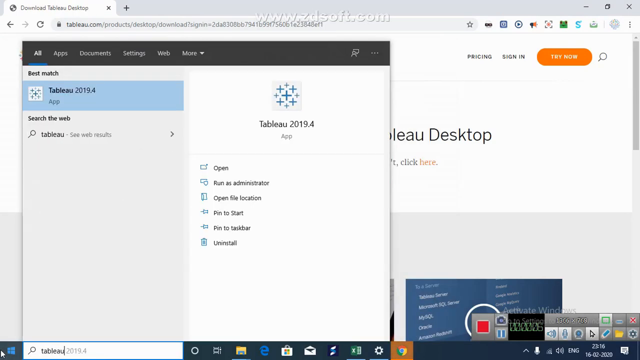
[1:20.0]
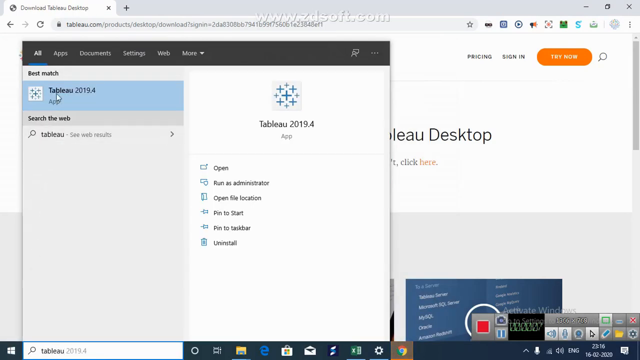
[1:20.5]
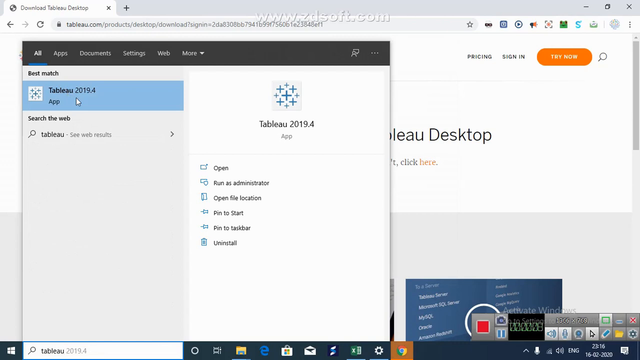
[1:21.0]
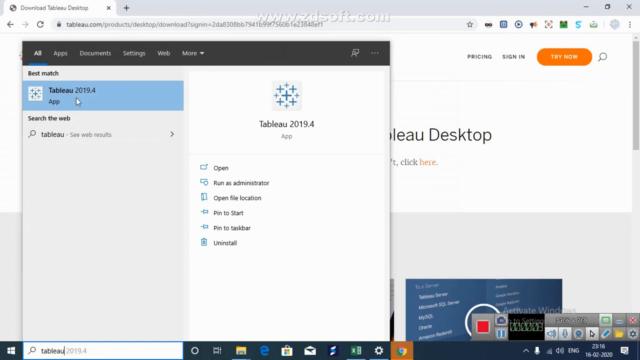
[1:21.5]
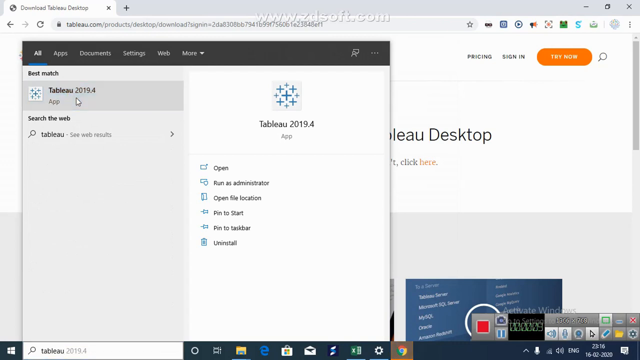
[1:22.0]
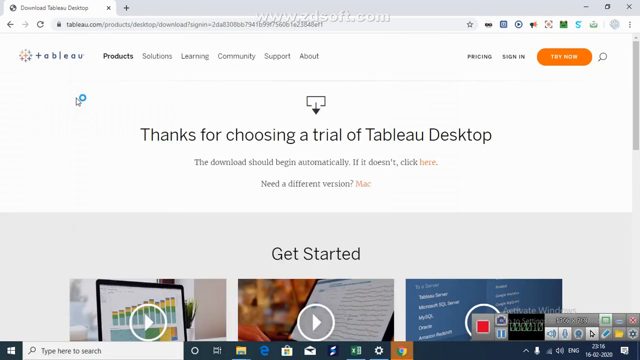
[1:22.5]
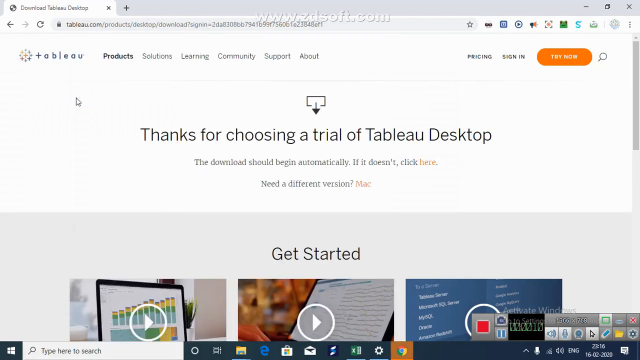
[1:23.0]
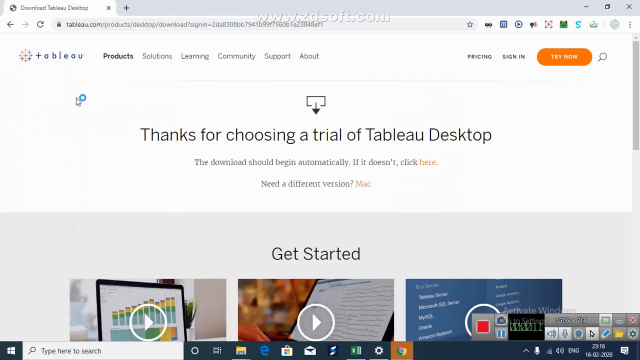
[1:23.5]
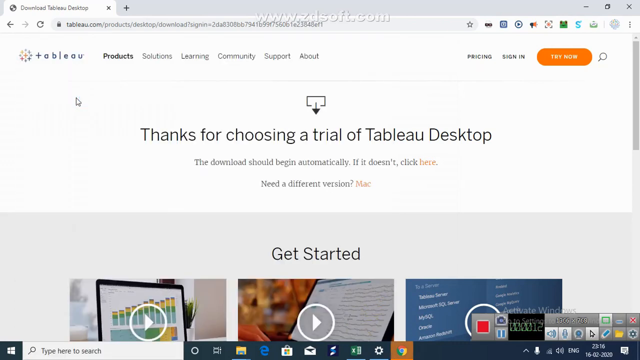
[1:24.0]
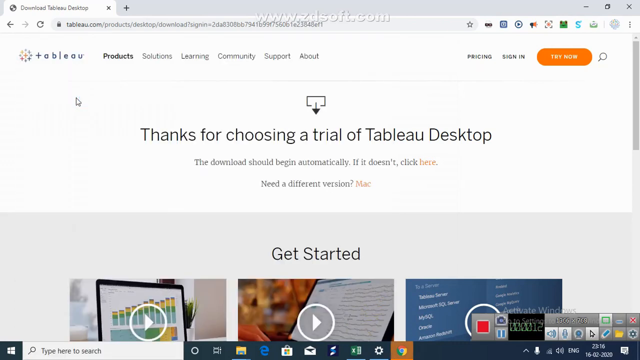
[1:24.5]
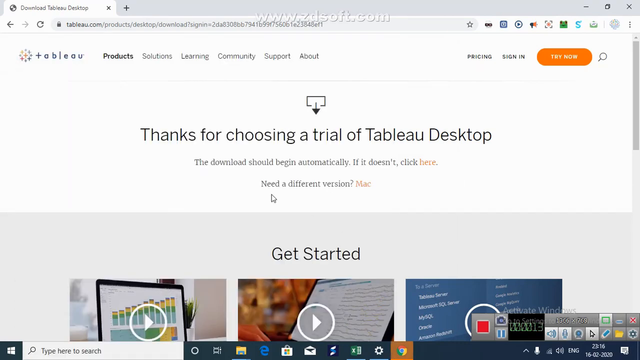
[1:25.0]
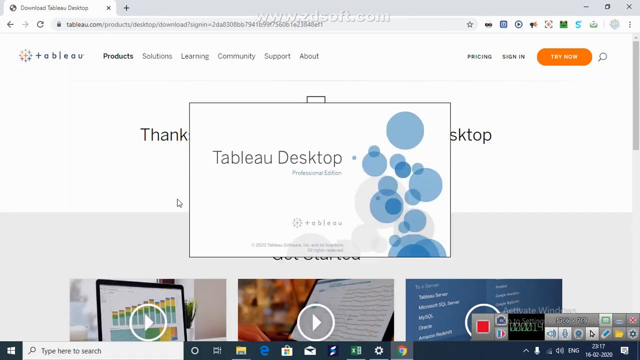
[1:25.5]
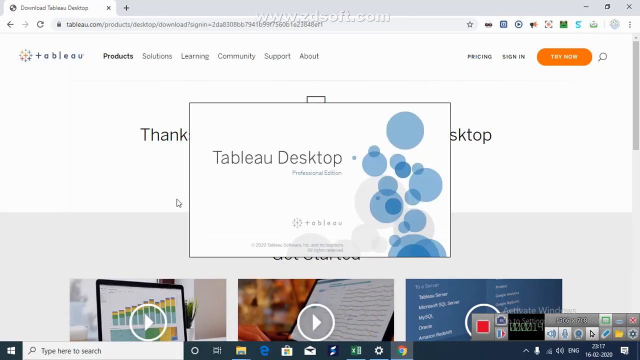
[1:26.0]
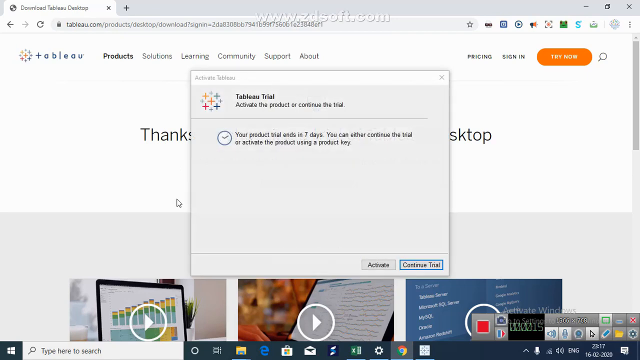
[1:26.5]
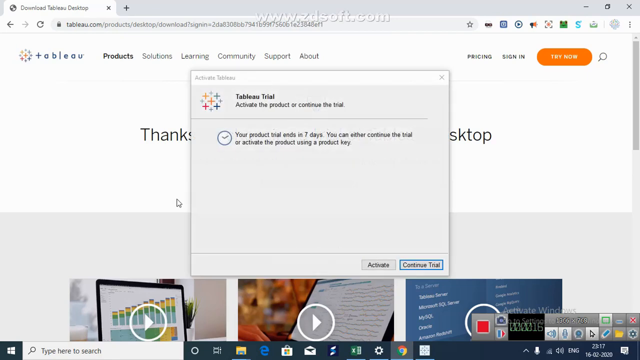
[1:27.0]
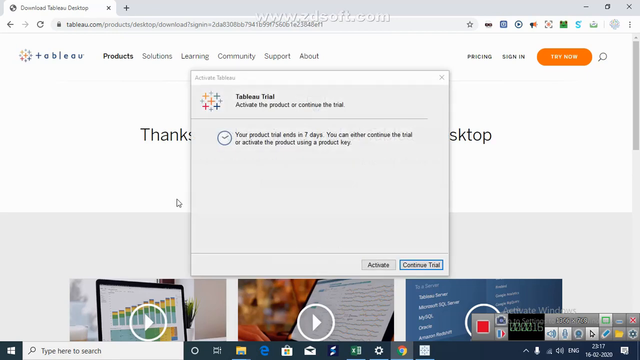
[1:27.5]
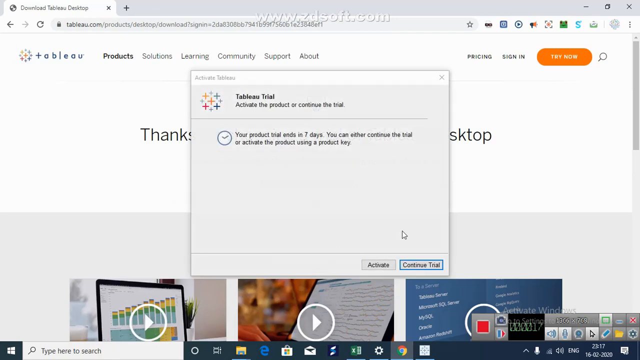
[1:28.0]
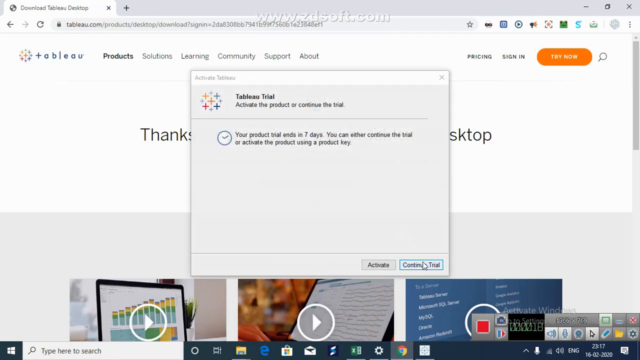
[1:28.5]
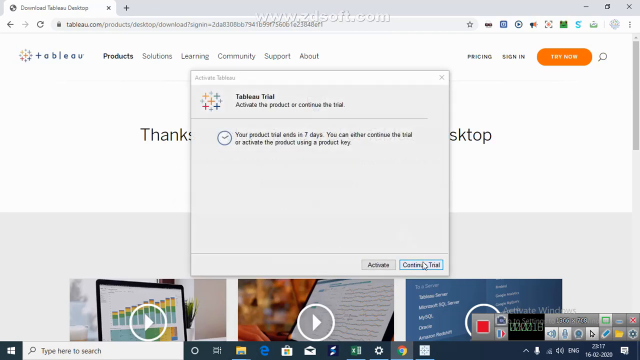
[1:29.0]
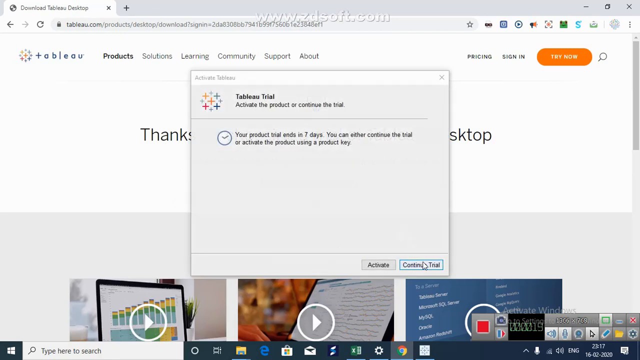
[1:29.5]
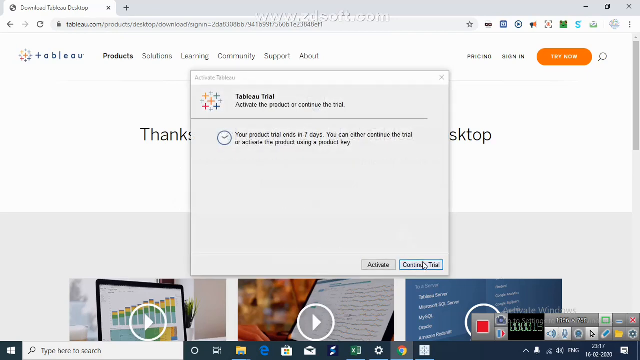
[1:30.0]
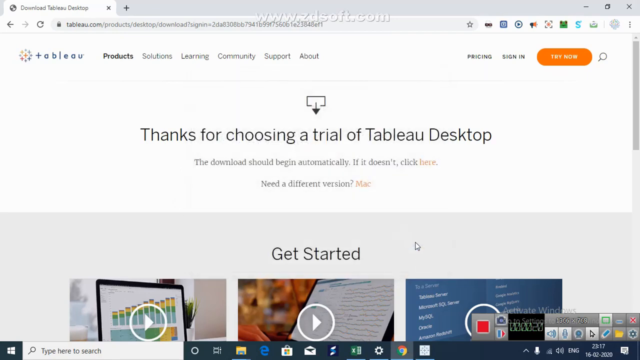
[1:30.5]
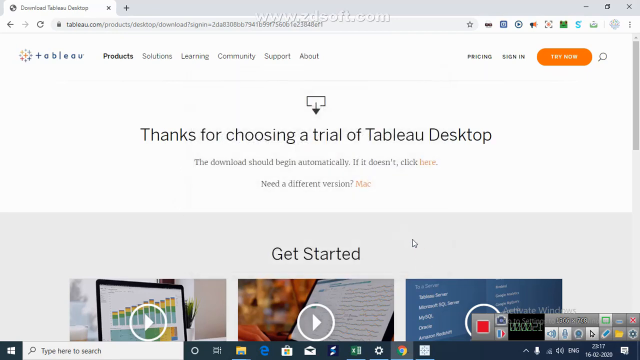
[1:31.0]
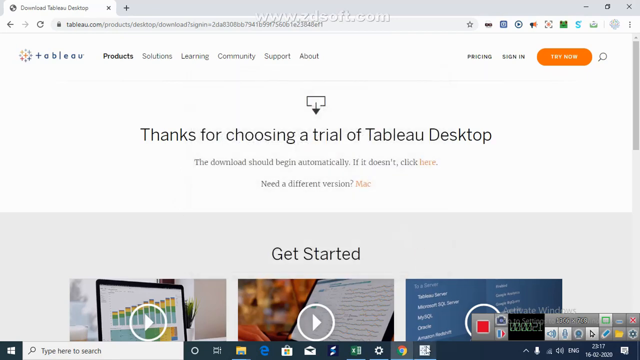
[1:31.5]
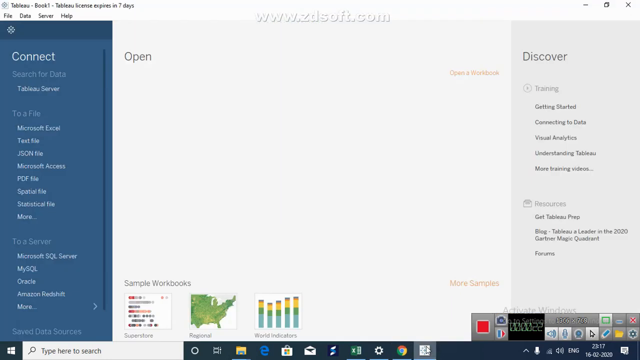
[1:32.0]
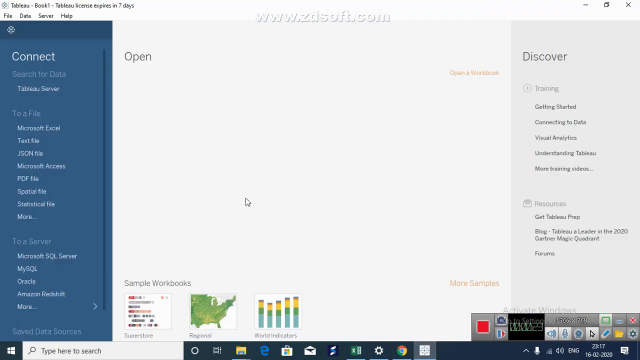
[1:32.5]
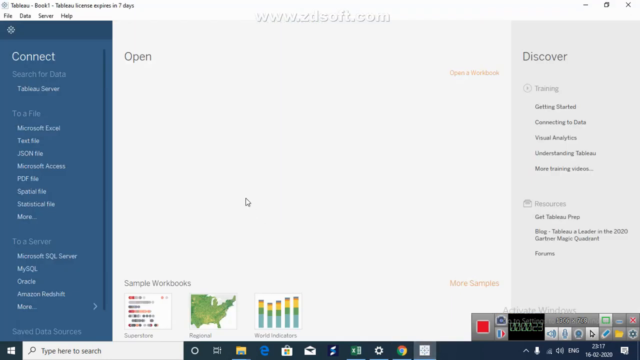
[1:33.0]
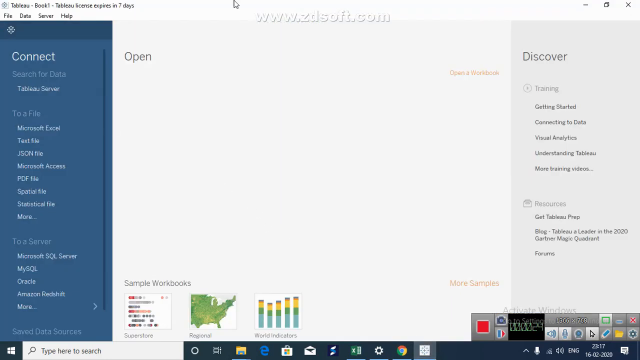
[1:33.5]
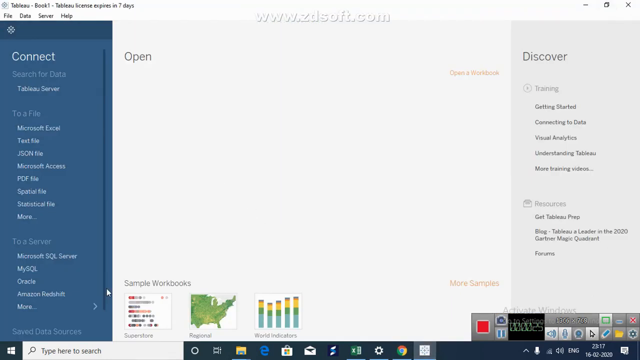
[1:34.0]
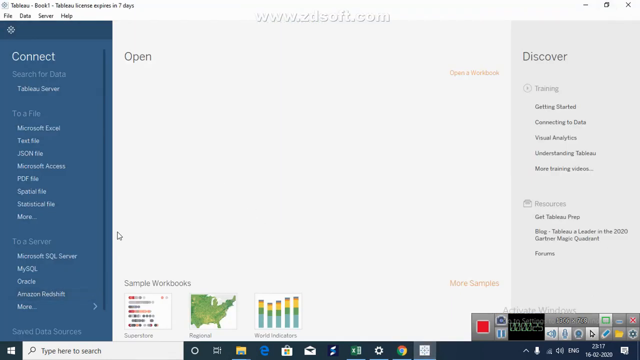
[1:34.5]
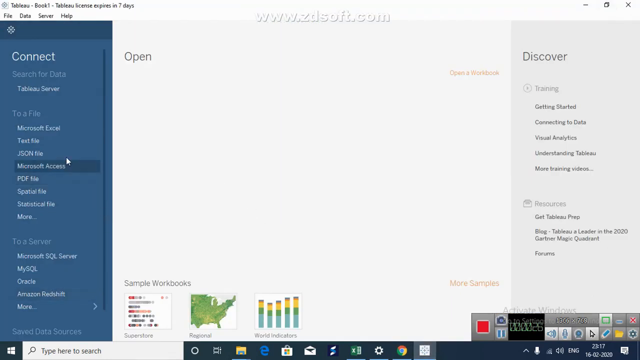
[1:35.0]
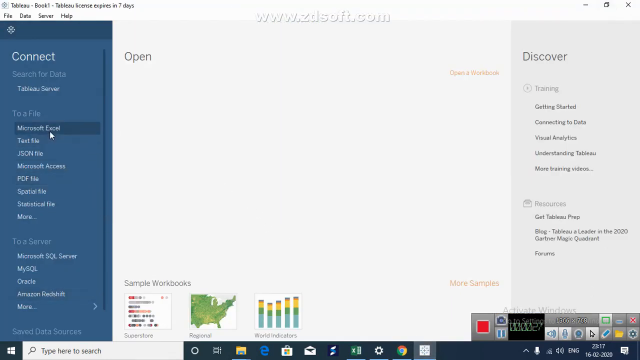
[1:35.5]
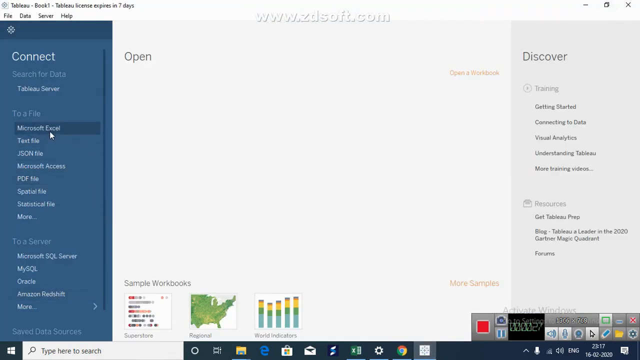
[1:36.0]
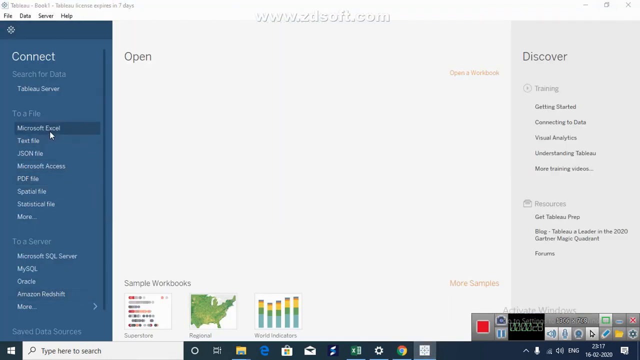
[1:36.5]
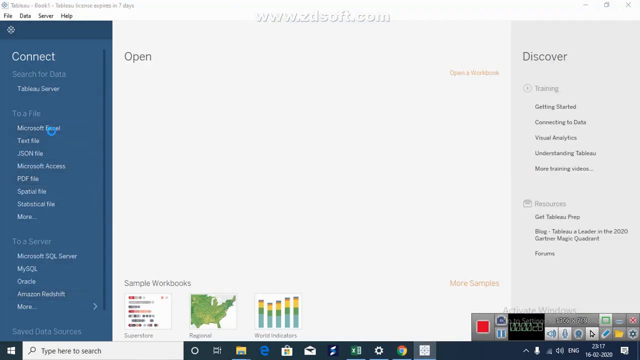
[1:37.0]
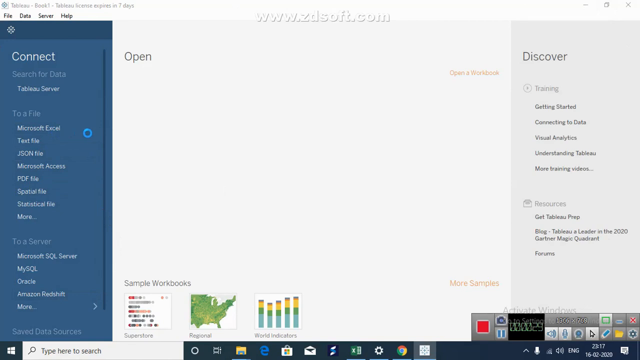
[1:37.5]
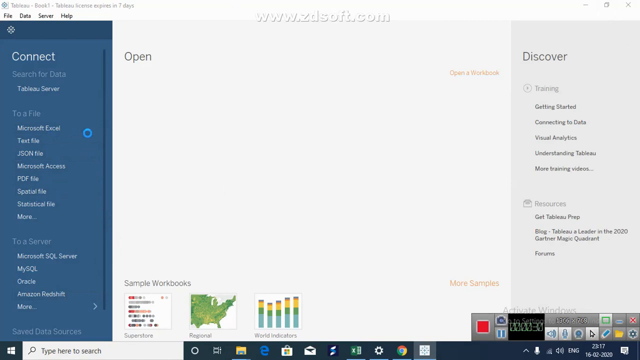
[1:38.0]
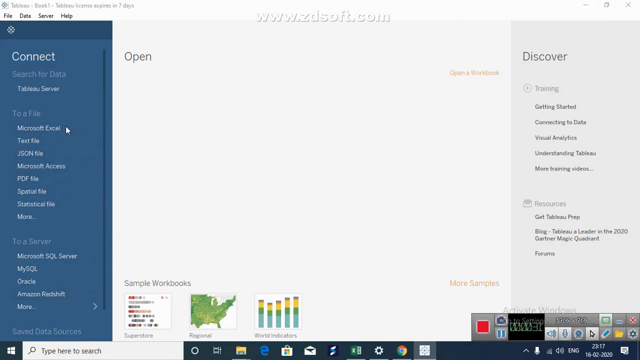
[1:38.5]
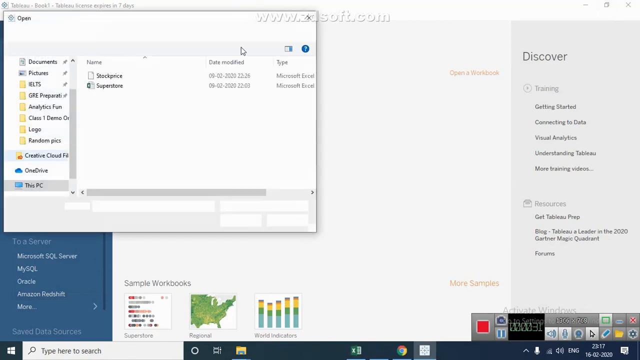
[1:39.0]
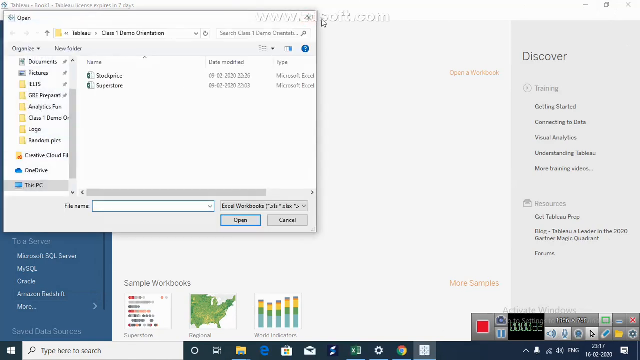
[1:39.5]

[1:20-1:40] A smaller window is open on the left side of the screen, with options in white letters: "all", "apps", "documents", "settings", "web" and, to the right, "more". Below on the left, in black letters on a white background, it says "best matched", and below that "TABLEAU 2019.4", an app. To the right is the TABLEAU 2019.4 app again, with a white square above it bearing a number of blue crosses that look like stars. Below it are the options "open", "run as administrator", "open file location", "pin to start", "pin to taskbar" and "uninstall". The cursor clicks the item on the left side for the app, and another window pops up about the trial, with "continue trial" at the bottom; the cursor clicks it. Another screen pops up with a blue menu on the left side. The cursor clicks Microsoft Excel, then goes up and closes it.